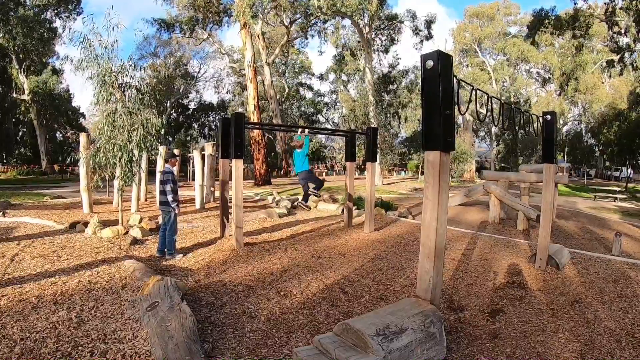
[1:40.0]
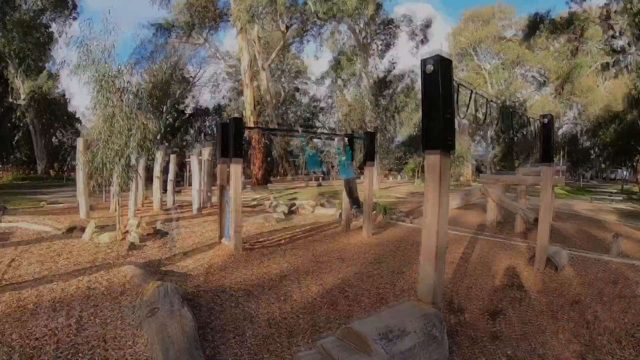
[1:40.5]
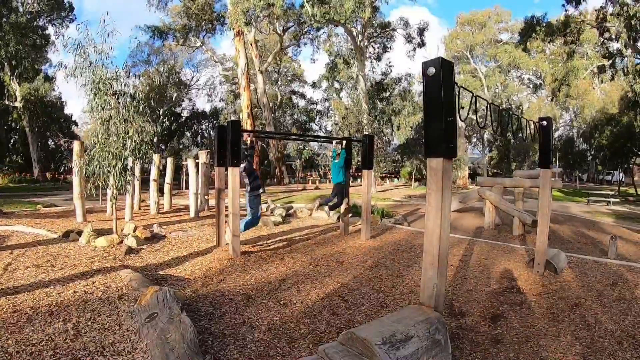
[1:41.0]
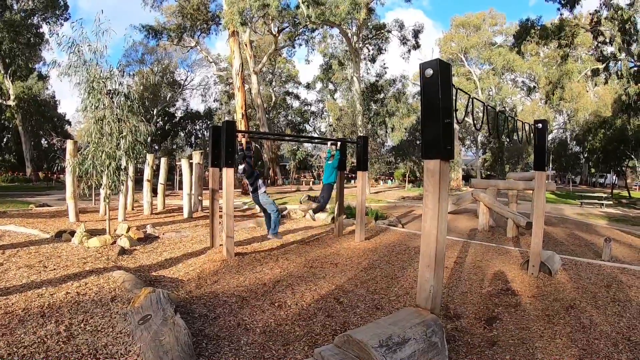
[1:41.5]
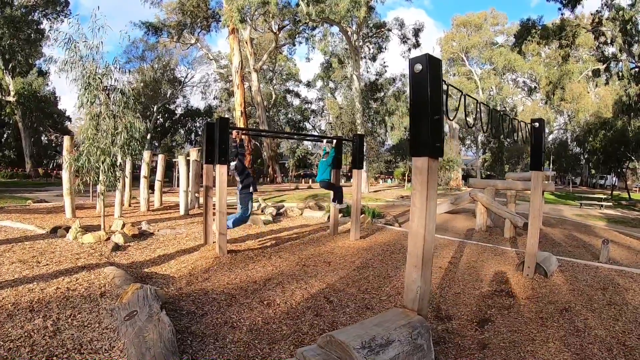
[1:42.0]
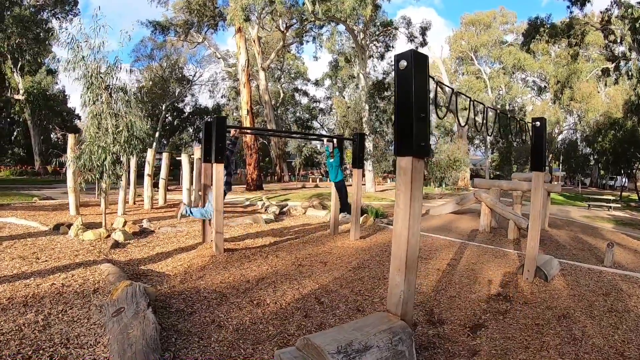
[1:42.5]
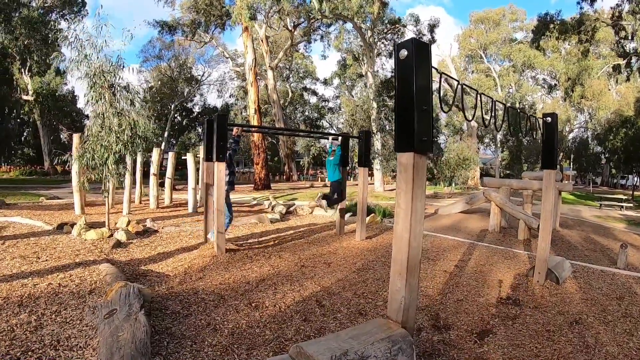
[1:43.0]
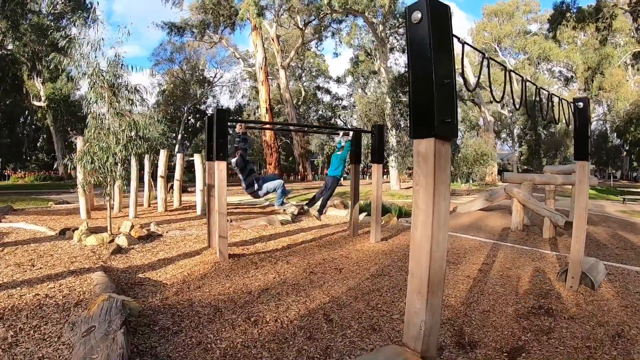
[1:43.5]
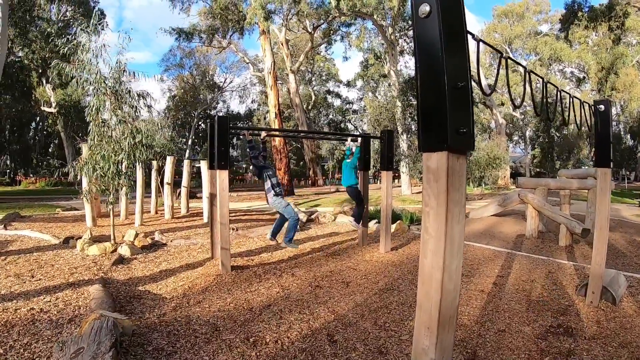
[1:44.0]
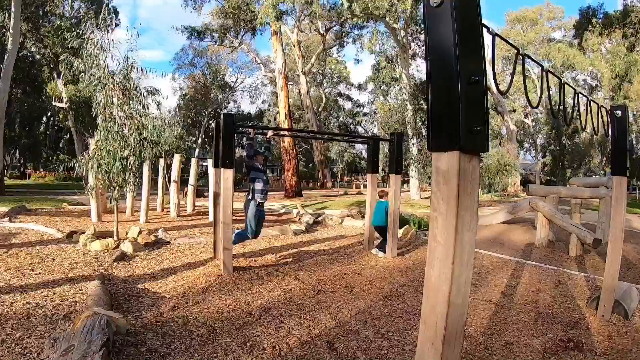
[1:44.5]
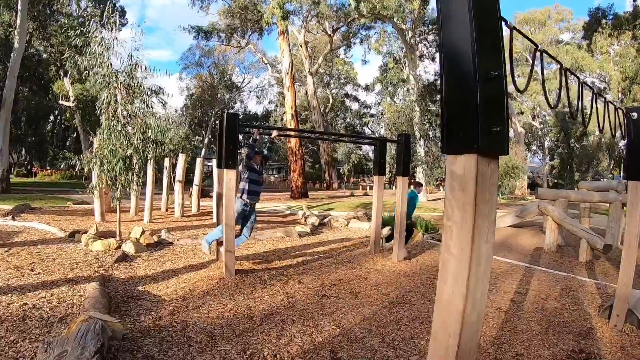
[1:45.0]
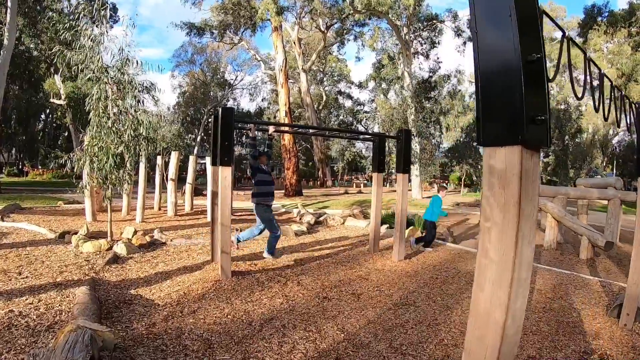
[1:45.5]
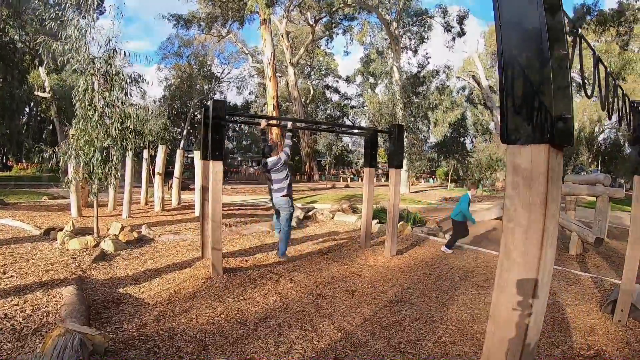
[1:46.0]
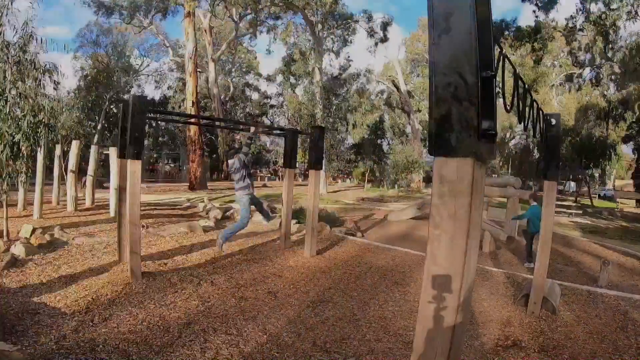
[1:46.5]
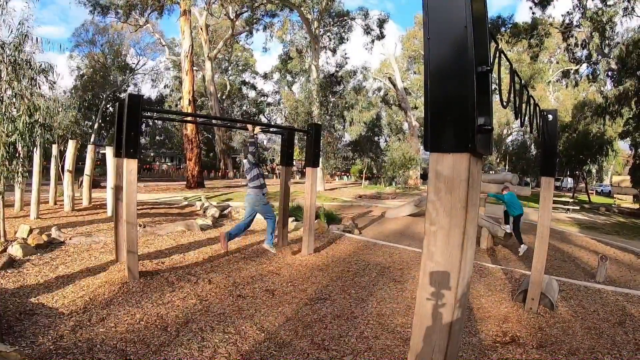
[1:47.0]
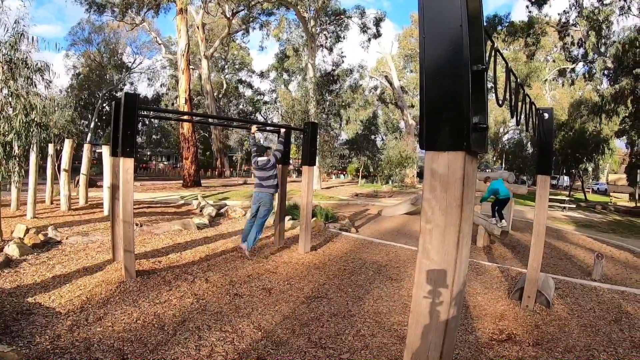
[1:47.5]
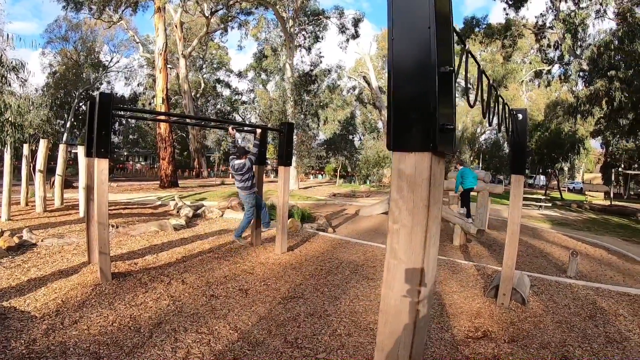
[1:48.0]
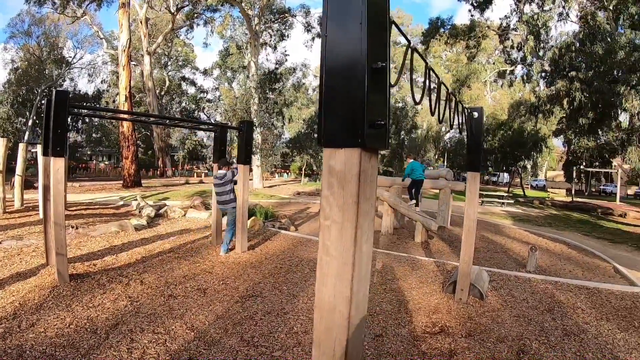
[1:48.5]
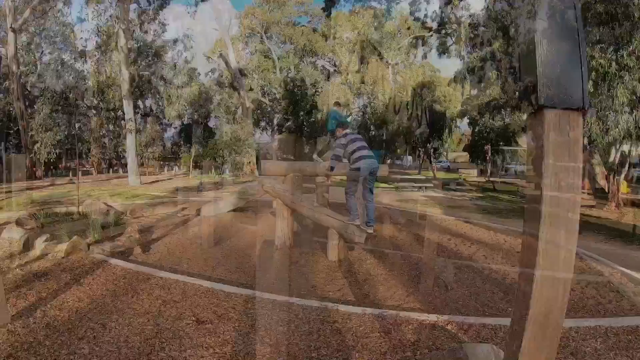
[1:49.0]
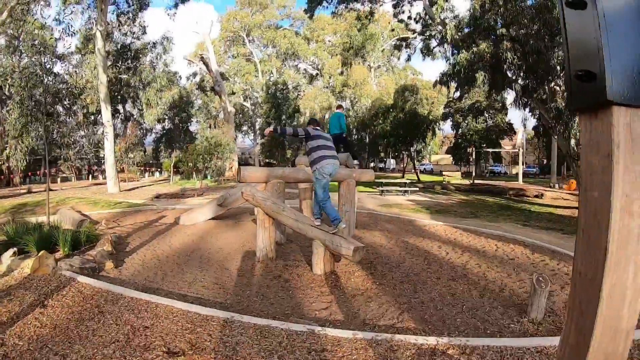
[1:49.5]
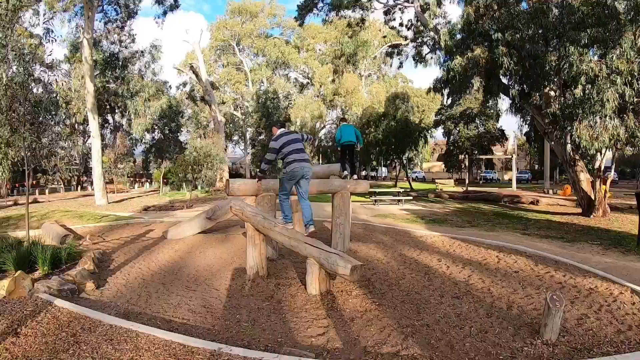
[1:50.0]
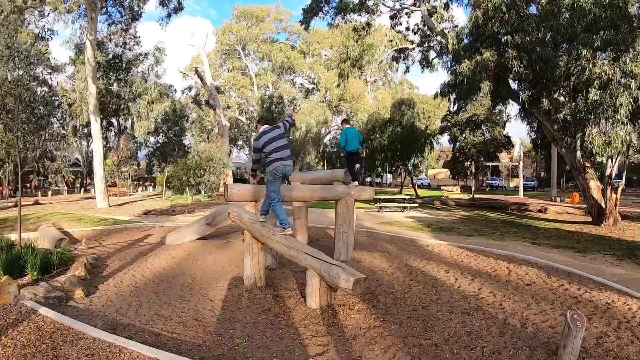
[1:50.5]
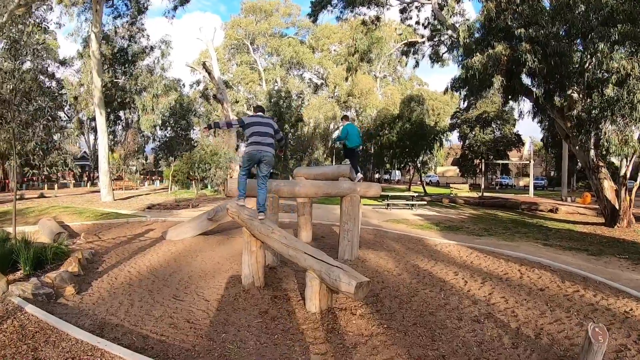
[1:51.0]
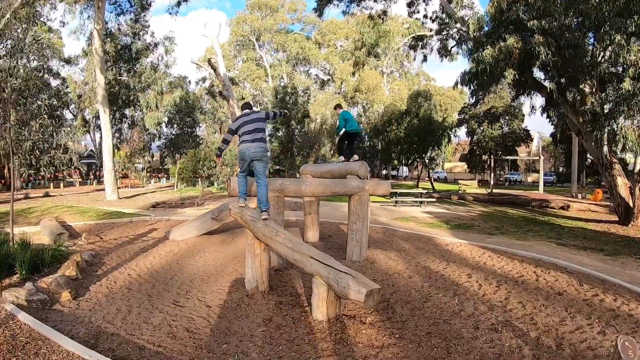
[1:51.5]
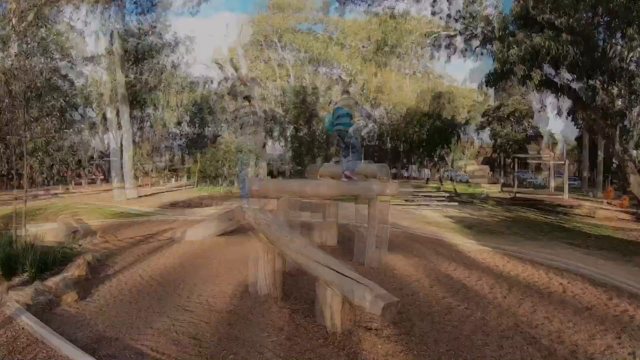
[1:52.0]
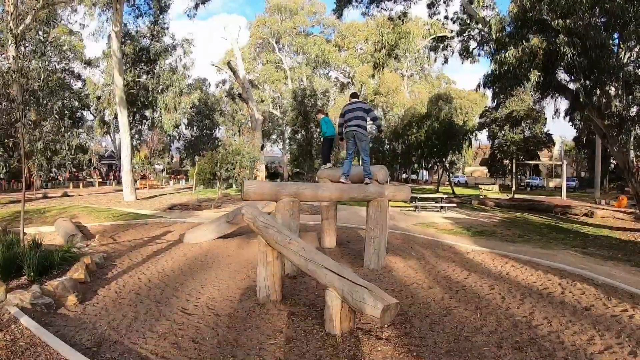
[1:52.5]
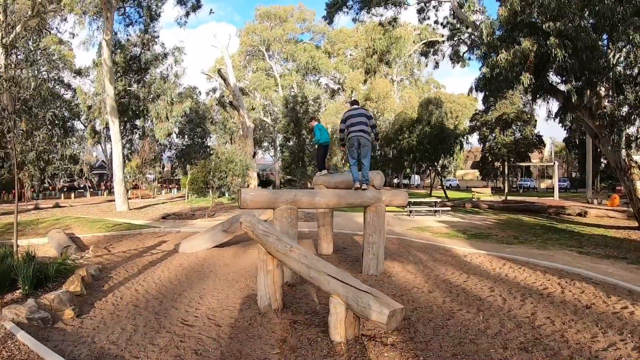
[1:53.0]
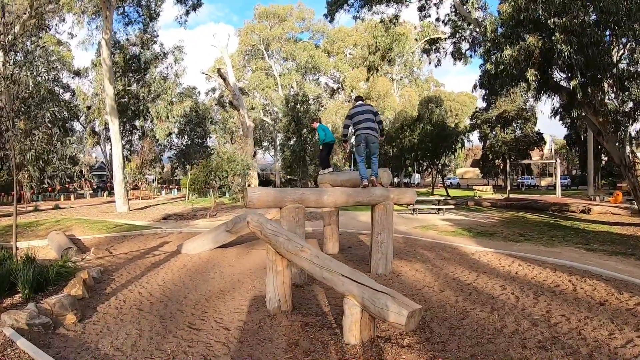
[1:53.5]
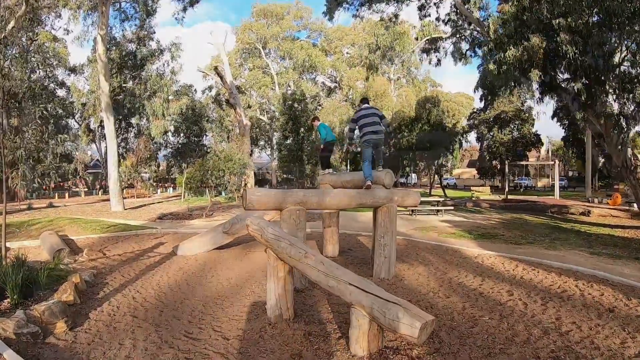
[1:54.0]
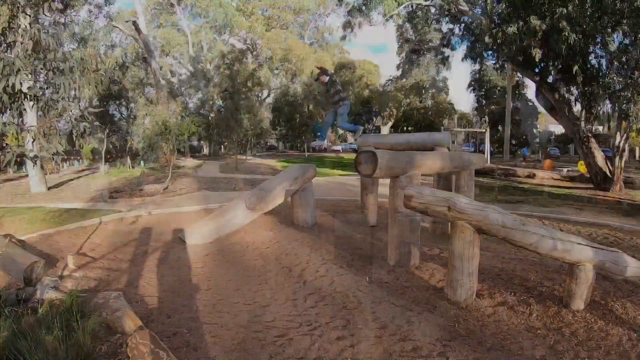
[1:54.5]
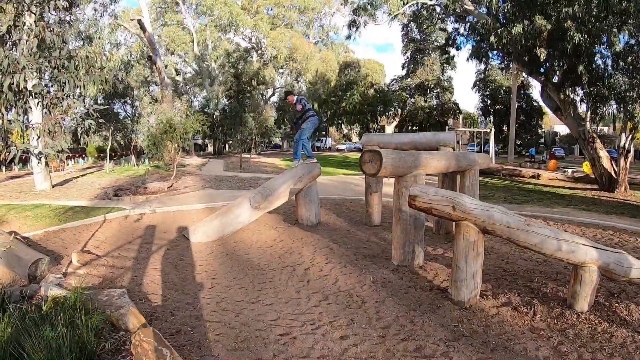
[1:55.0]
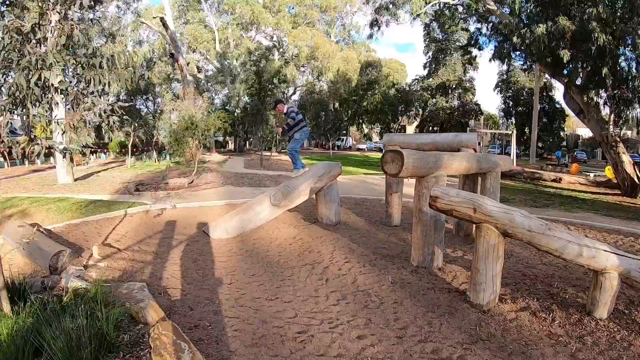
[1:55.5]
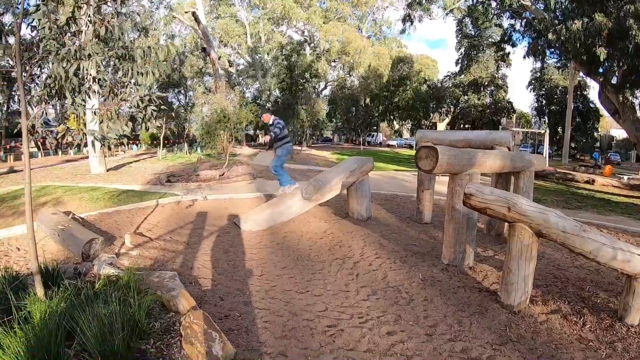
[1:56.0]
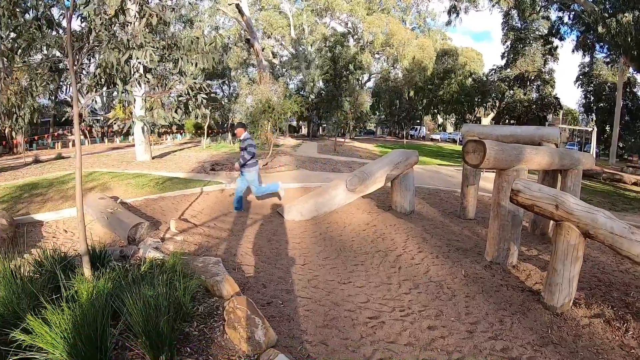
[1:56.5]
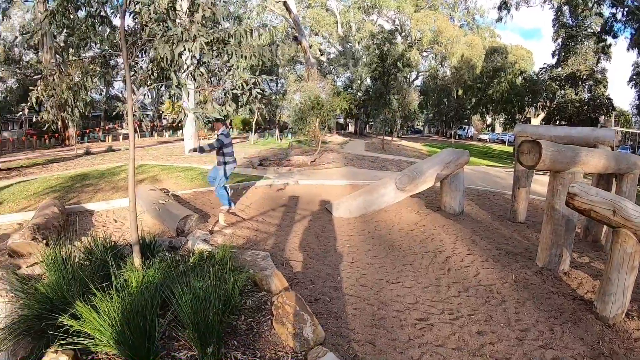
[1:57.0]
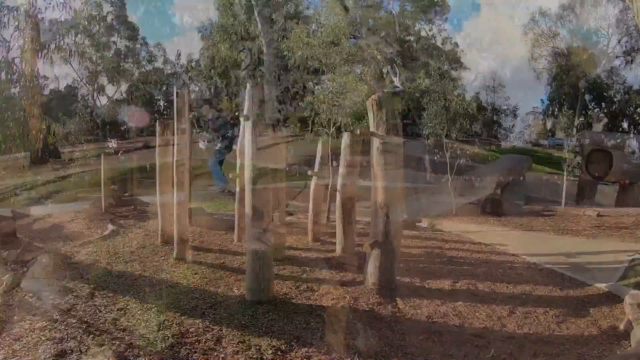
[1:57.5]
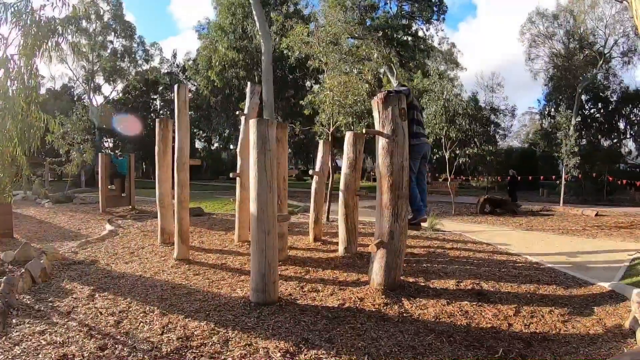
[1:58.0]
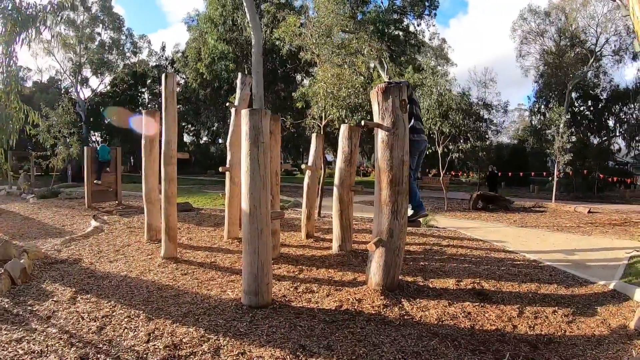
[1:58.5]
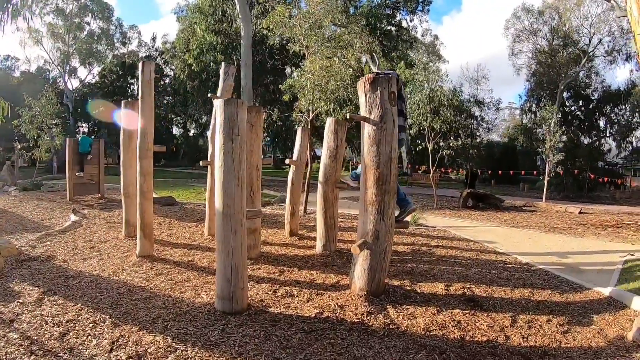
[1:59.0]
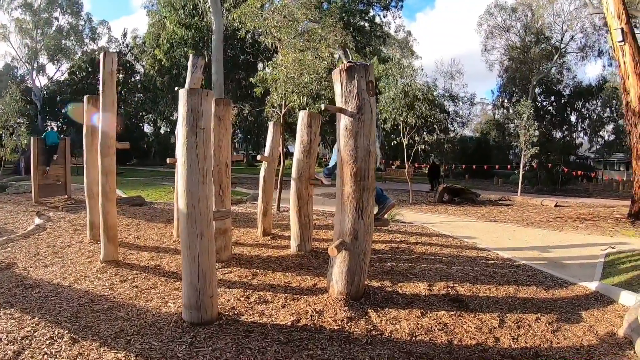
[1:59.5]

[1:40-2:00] A long shot shows the boy crossing the overhead ladder by his hands, hanging down and going one rung at a time from one side to the other, while the man in the polo shirt and hat watches. The playground area of the park is separated into different obstacles and challenges designed for kids, a ninja challenge. There is a blue sky with white puffy clouds, lots of trees, and very long shadows. The man and the boy appear to be enjoying themselves. The man then follows the boy on the ladder, going across one hand at a time, and makes it across. They walk on slanted logs propped up with barriers and other logs, climbing slanted logs up and slanted logs down. The boy then appears to try to navigate the upended logs while the man does other parts of the challenge.